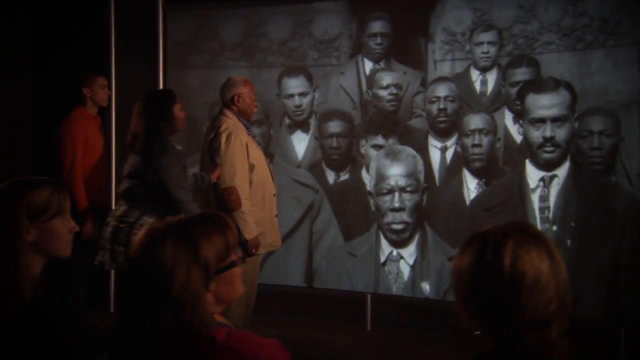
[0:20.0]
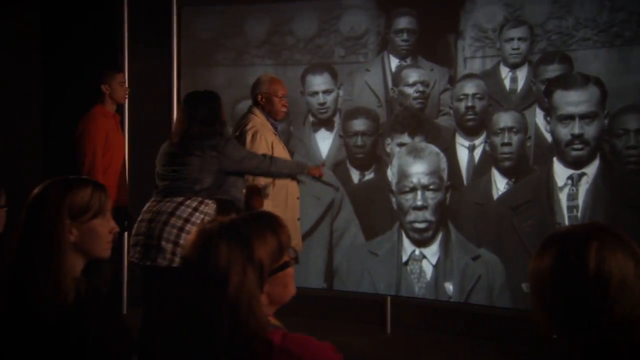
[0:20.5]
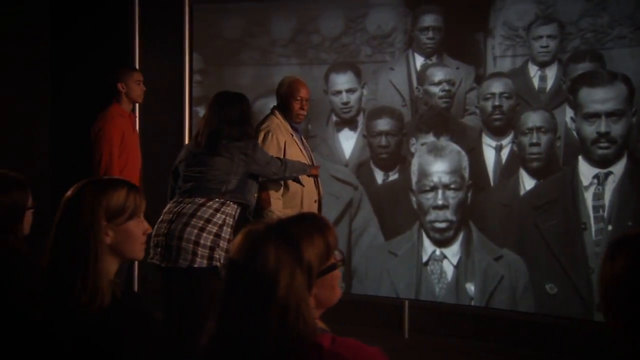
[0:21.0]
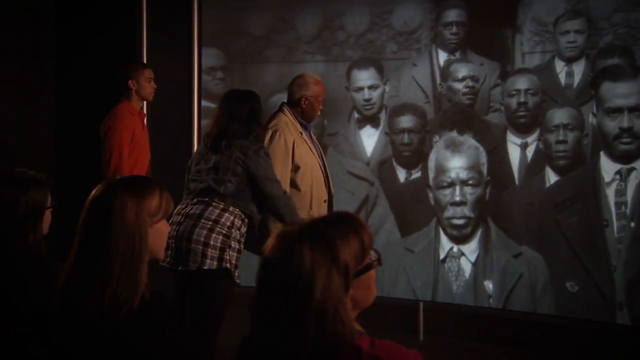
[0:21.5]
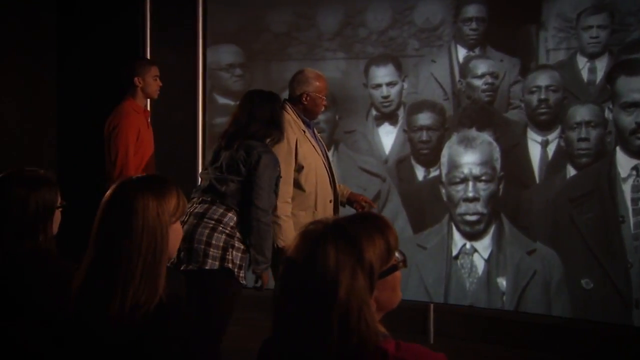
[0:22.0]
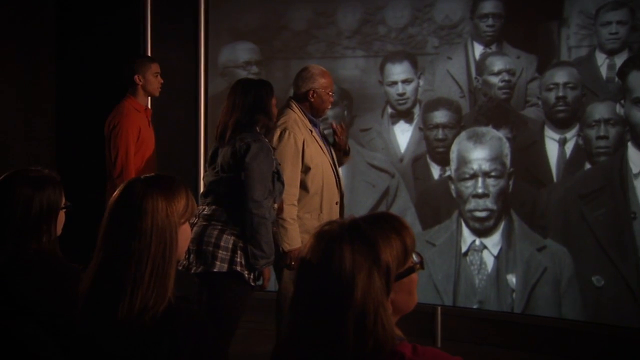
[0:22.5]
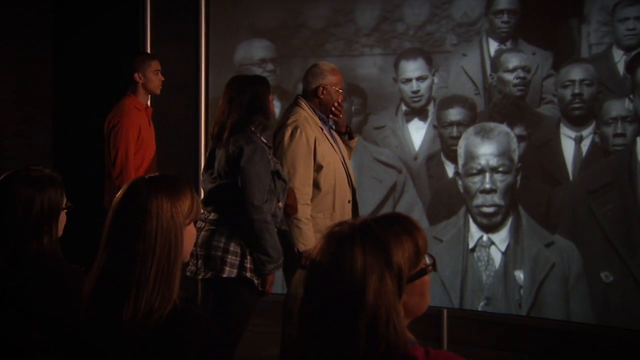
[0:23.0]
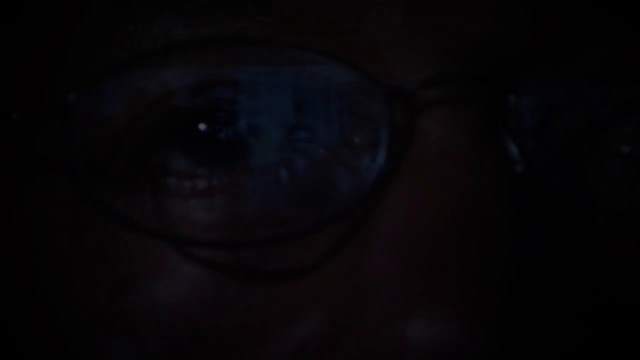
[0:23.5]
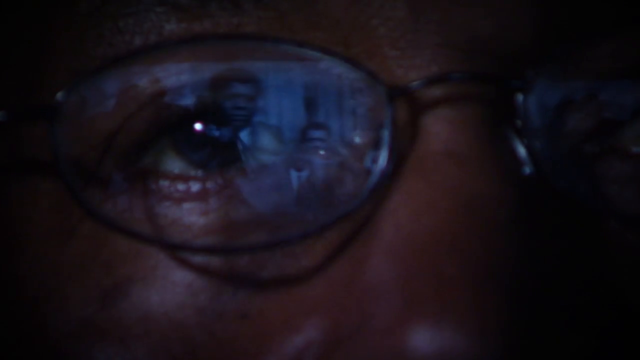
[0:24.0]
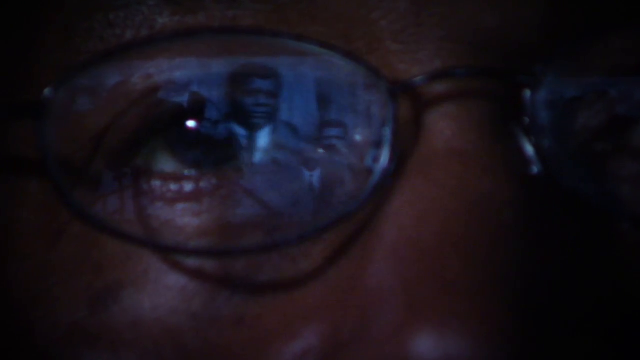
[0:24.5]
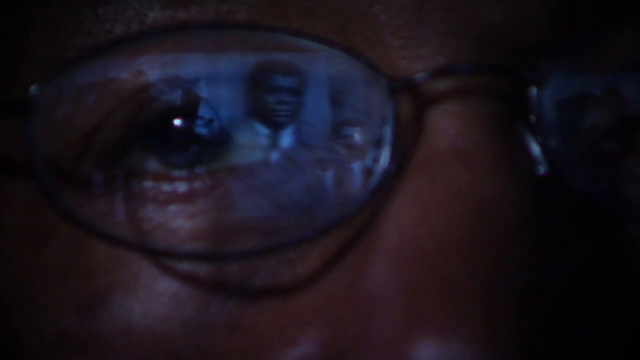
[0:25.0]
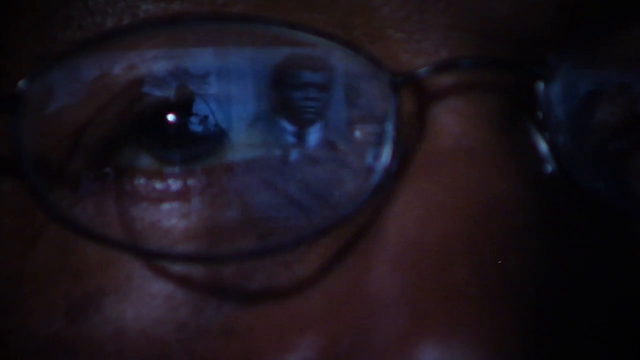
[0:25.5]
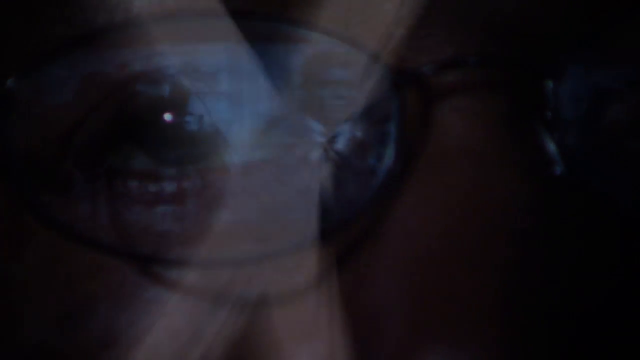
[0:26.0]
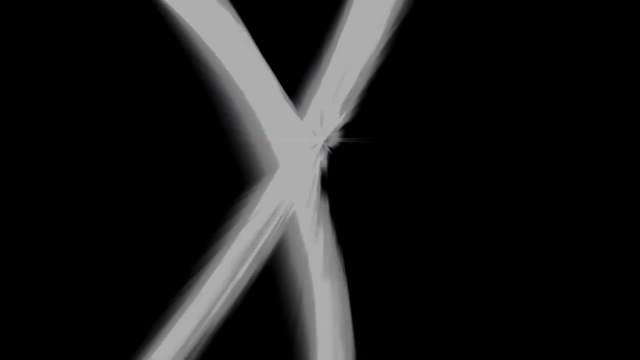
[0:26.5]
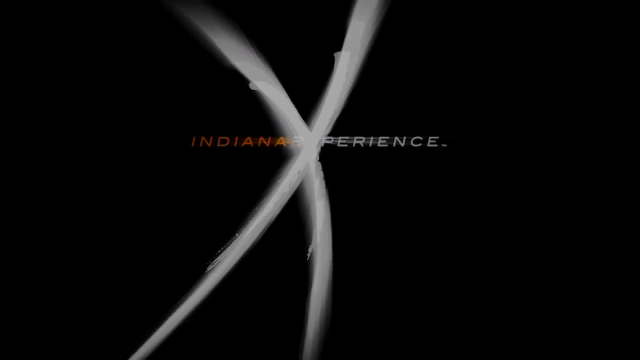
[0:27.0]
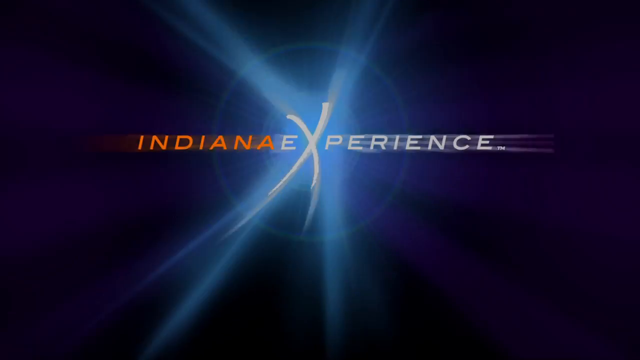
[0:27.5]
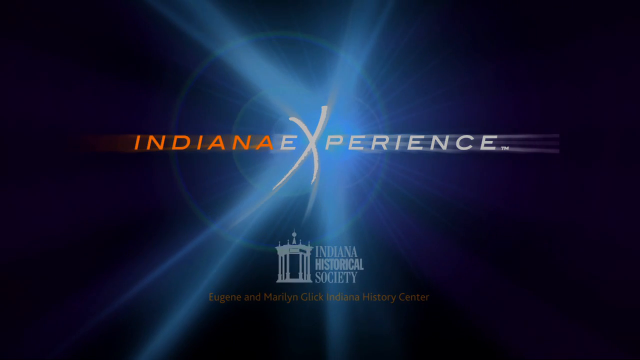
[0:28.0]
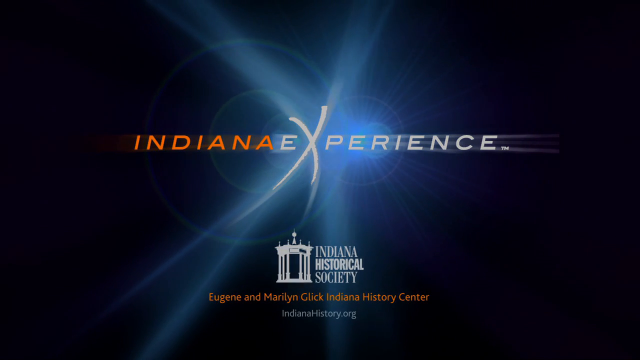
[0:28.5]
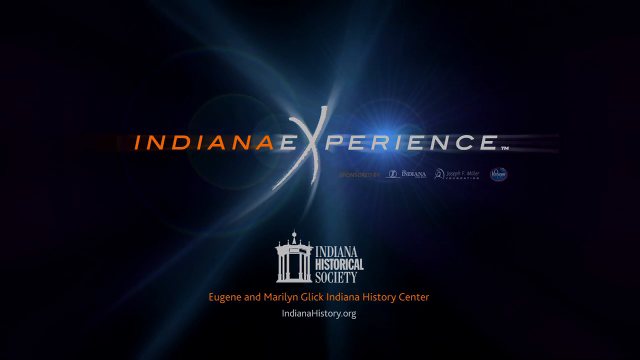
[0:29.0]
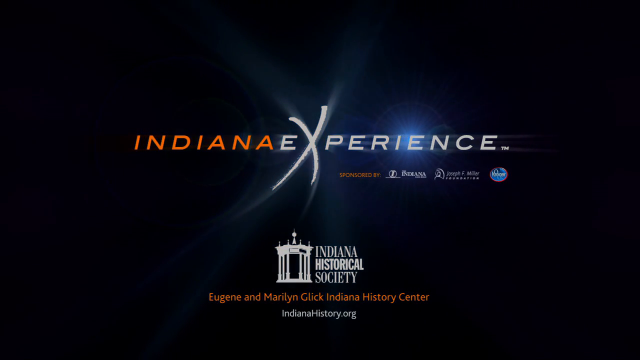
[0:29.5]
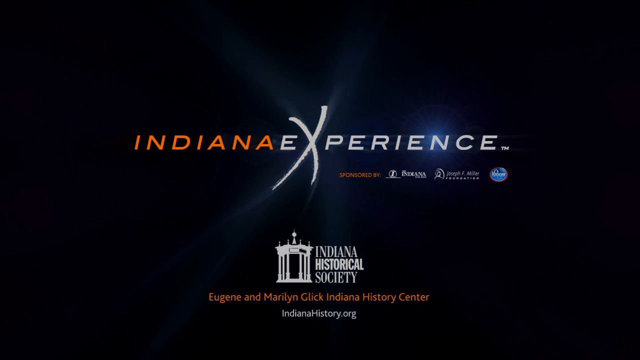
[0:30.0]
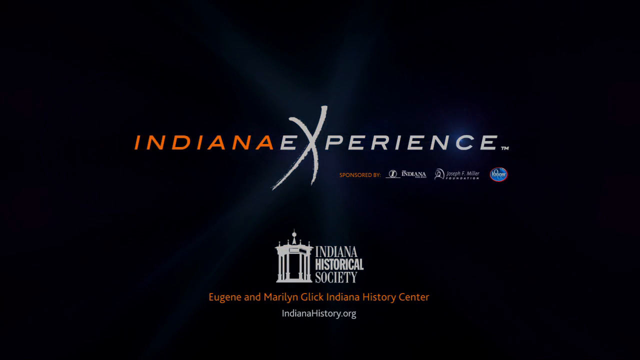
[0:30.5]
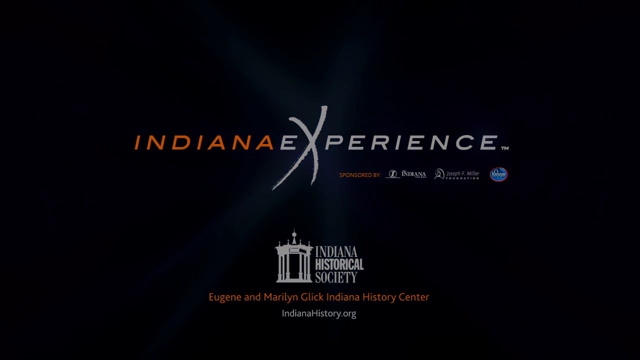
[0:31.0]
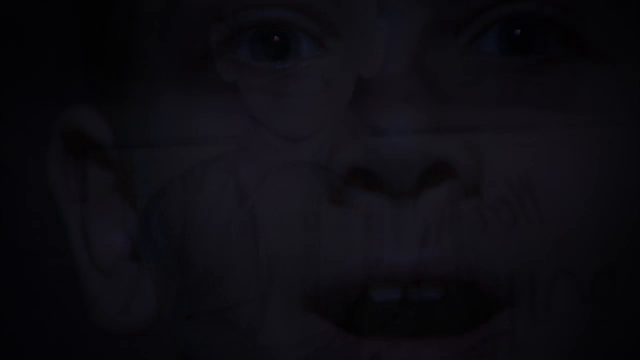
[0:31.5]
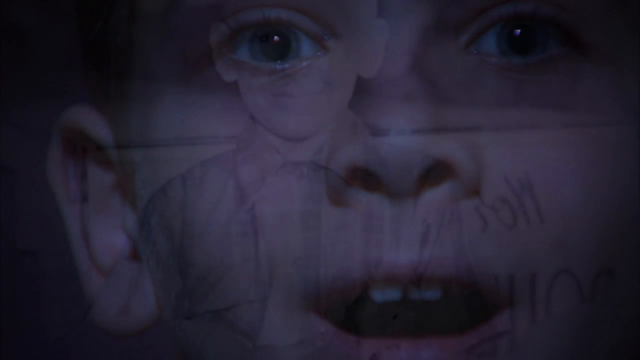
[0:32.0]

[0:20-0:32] A crowd of people stands in a dark room: three Caucasian females, one African female, and two males, both African. They are all looking at a large screen showing a black and white image of many African males, all wearing suits with ties and white shirts underneath, standing inside a stone setting. The camera pans slowly to the right, and the African female begins pointing at one of the pictures.